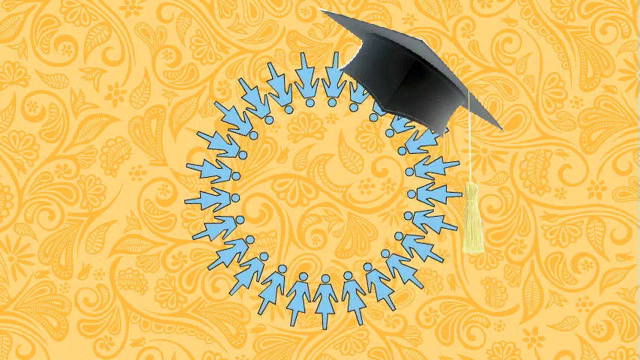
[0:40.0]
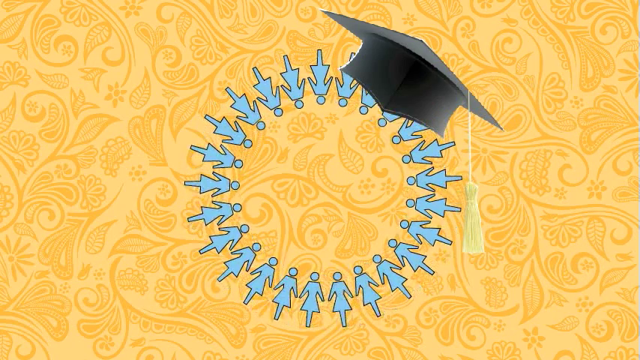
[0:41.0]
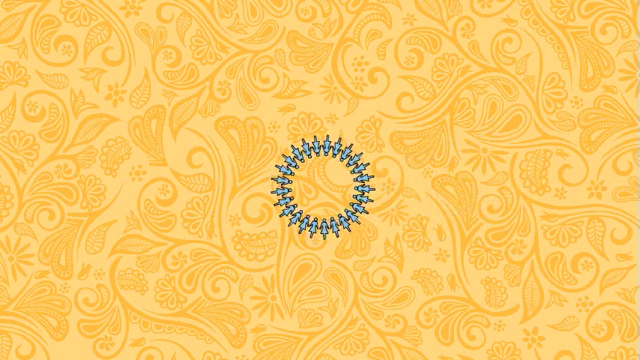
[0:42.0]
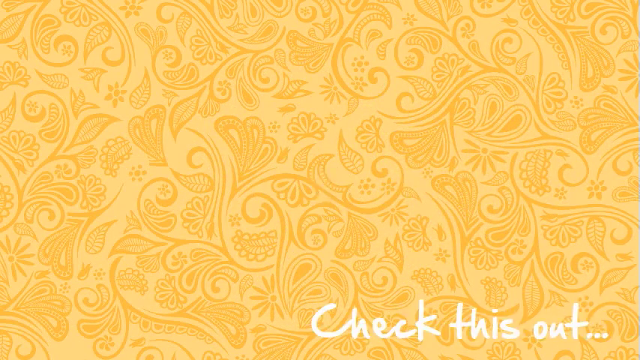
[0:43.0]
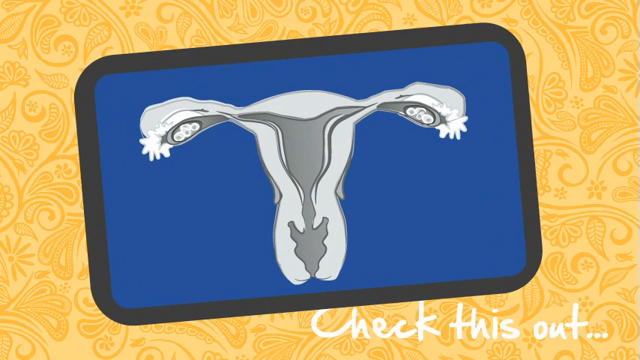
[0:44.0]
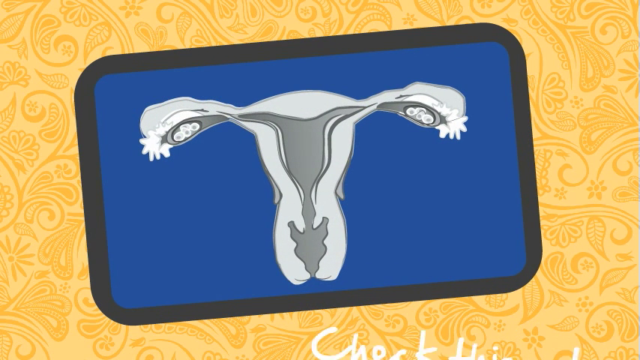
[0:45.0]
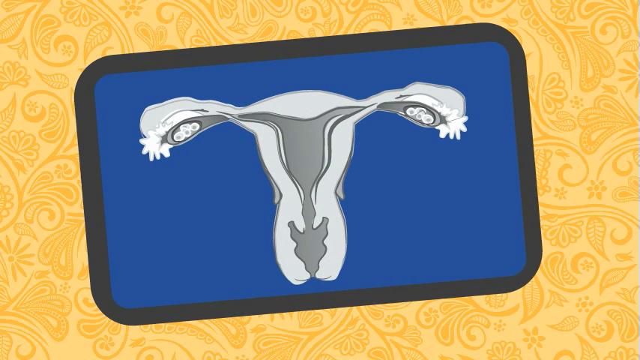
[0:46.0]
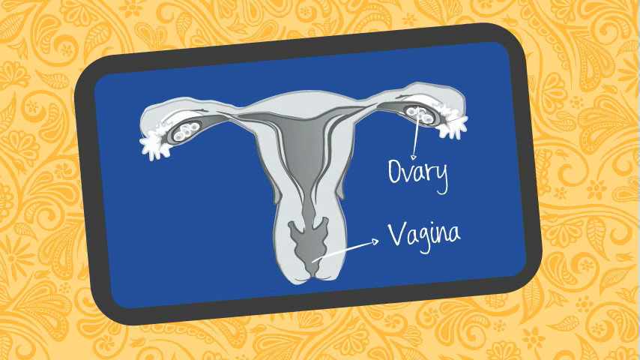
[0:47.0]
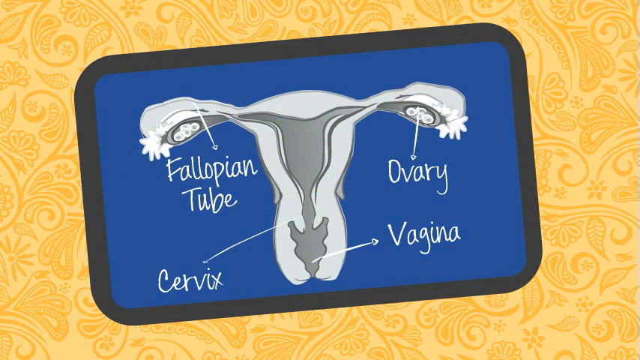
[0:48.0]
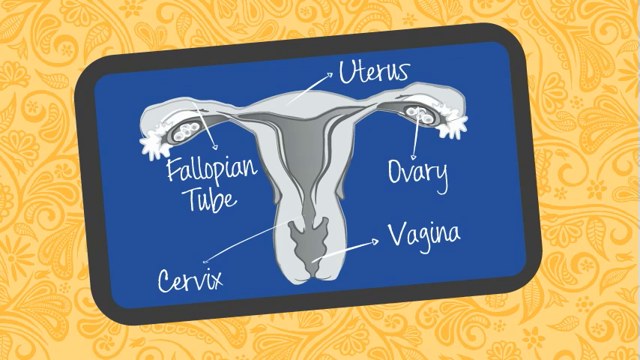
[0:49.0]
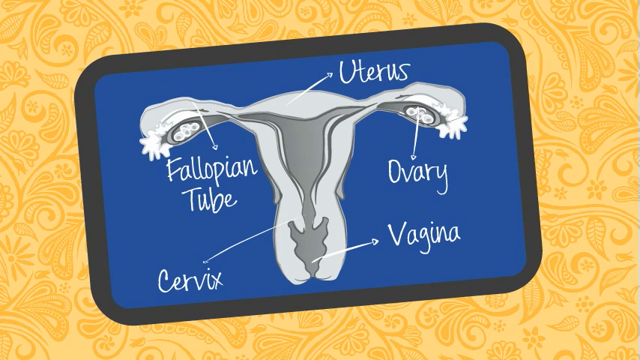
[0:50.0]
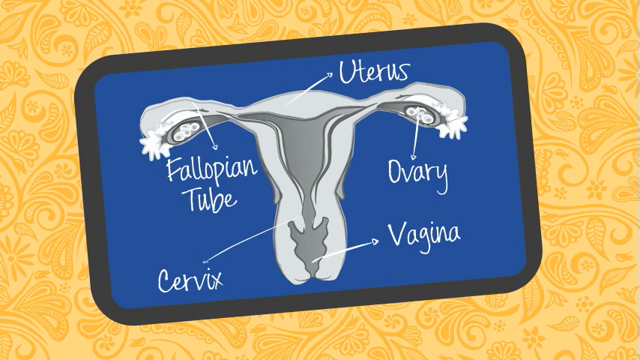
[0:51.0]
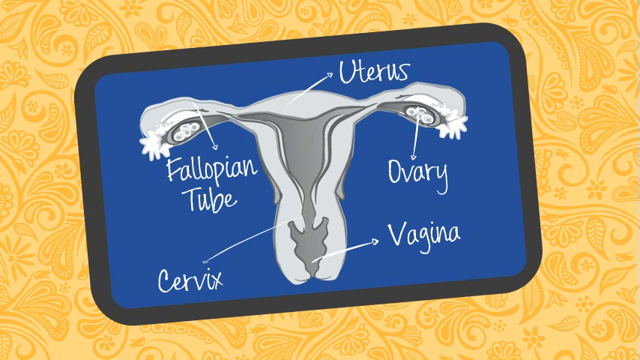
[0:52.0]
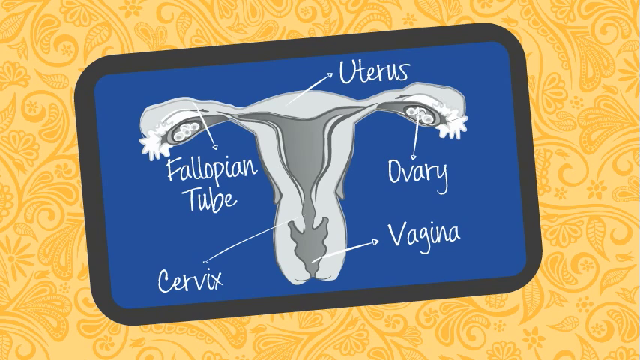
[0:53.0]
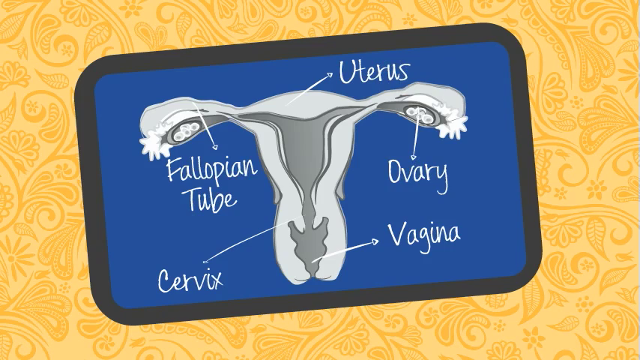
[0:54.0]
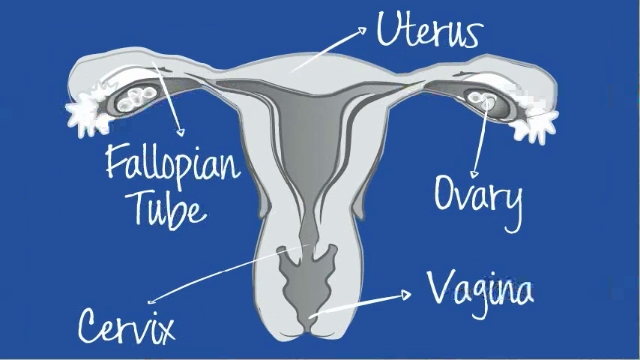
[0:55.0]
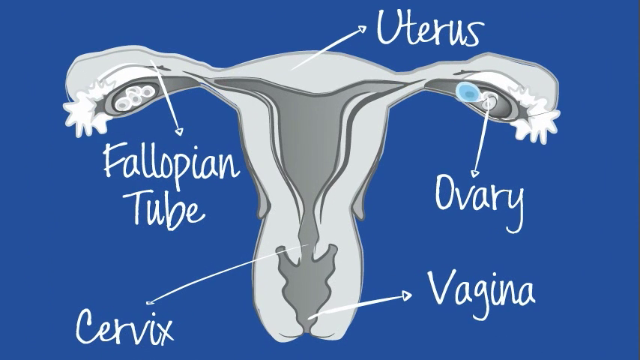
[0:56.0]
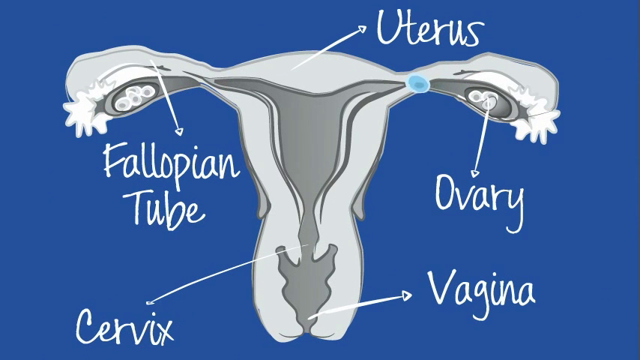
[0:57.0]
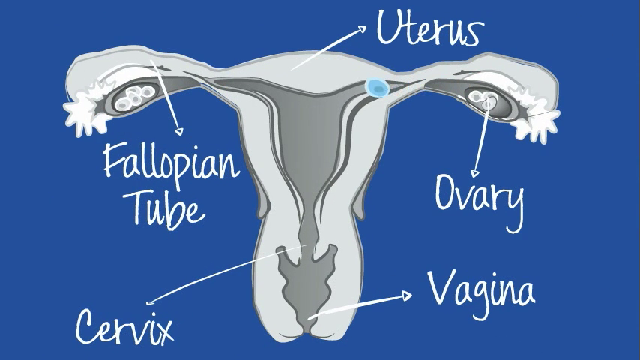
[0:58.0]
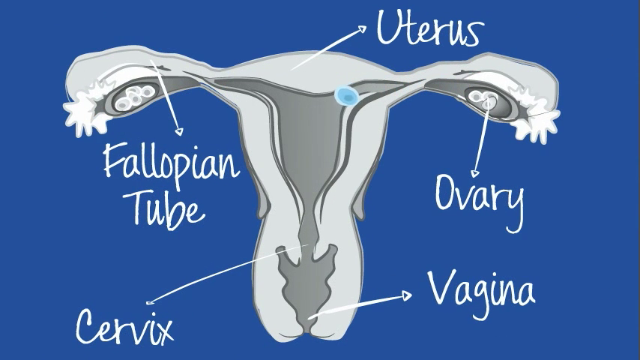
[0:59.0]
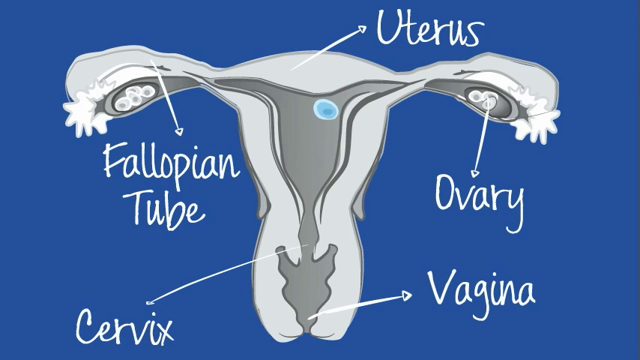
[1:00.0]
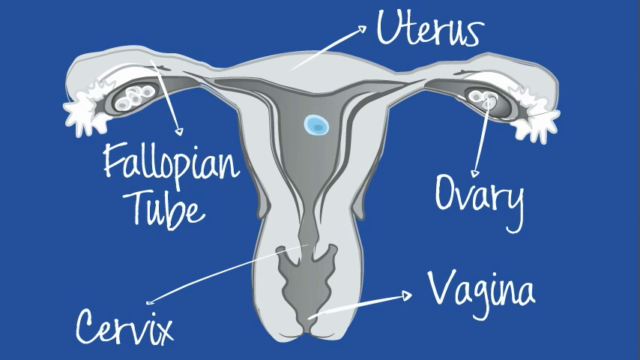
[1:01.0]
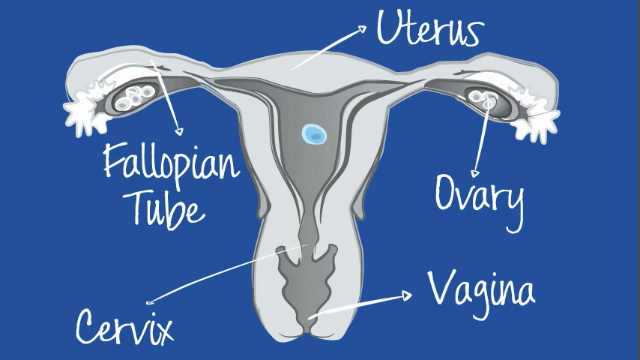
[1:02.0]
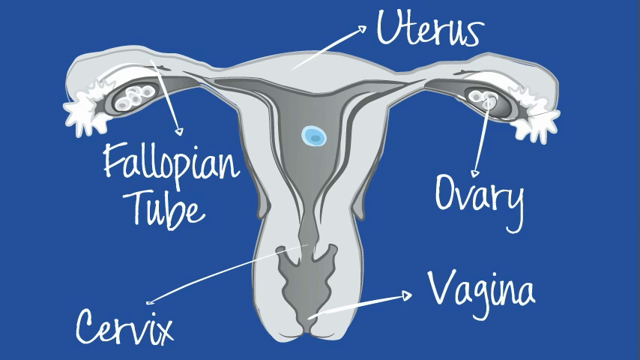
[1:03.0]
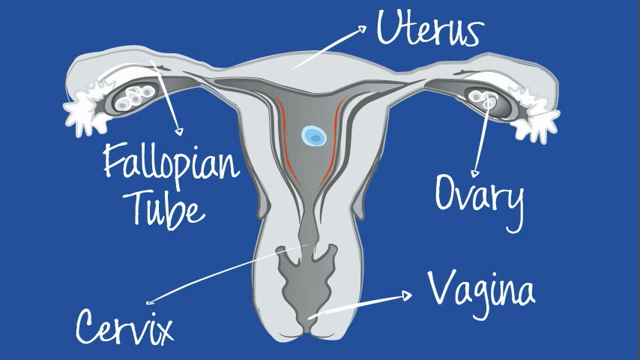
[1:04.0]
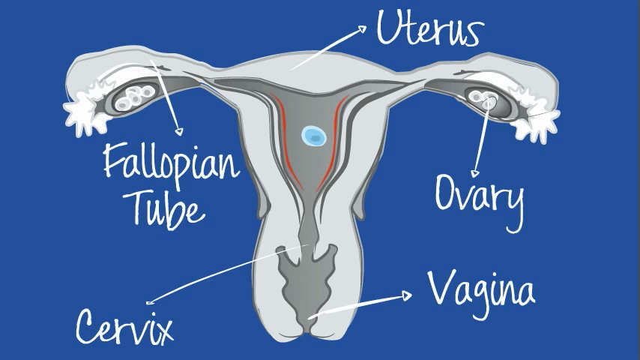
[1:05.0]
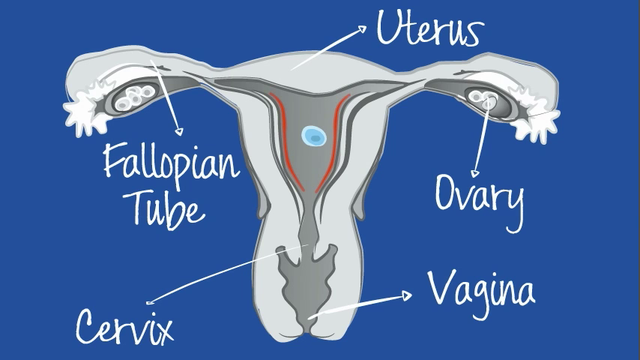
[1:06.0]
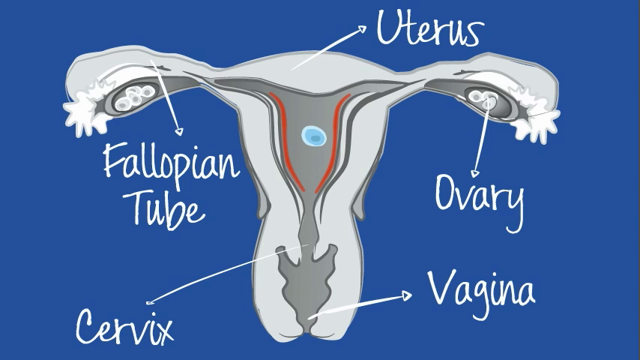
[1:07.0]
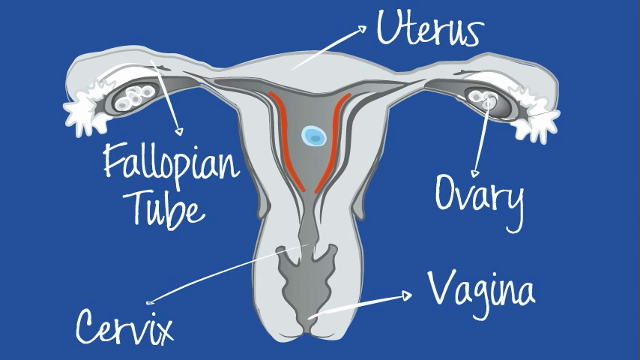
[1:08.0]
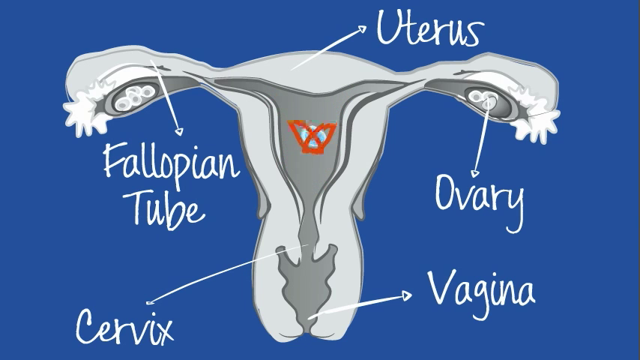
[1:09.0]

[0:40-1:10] A yellow background has darker yellow patterns running through it, forming vines all over the screen. In the center, a number of symbols that look like women wearing dresses, like the symbol on a women's bathroom but with legs, form a circle with their heads pointing toward the inside and their feet toward the outside. A black graduation cap with a yellow tassel hangs on the right side of the circle. The women spin around, and the circle disappears into the bottom right of the screen, moving from left to right. Letters reading "check this out" appear. Then a blue rectangle appears, wider than it is tall, and an illustration of a woman's reproductive organs appears in it; it is white, with the birth canal in gray. White words appear: on the right side, in the blue area, "ovary" with a line pointing up to the ovaries, and below it "vagina" with a line pointing left to the vagina. On the left side of the illustration, "fallopian tube" with a line pointing up to the fallopian tube, and below it "cervix" with a line pointing to the cervix. At the top right, "uterus" appears with a line pointing to the uterus. The yellow background disappears and the screen turns blue, showing the same drawing. A blue egg comes out of the ovary, travels down the tube and floats to what seems to be the center of the uterus. A red line appears around the ovary and forms a circle.